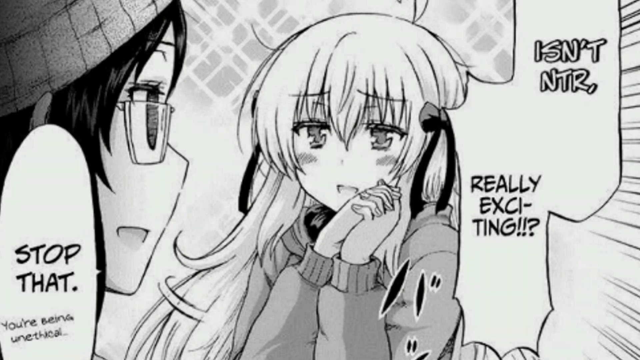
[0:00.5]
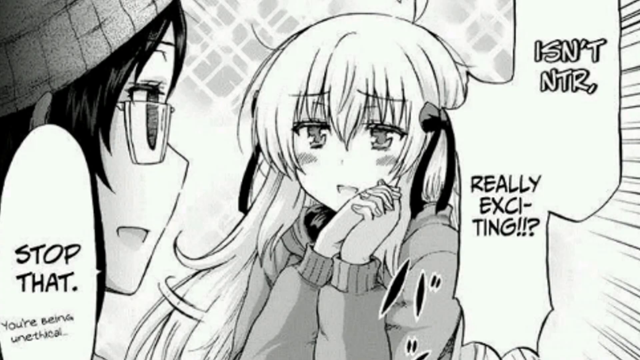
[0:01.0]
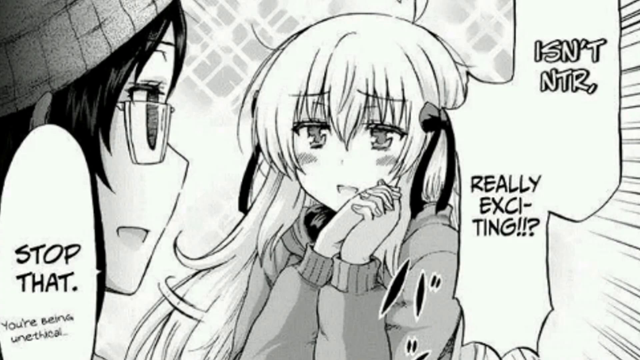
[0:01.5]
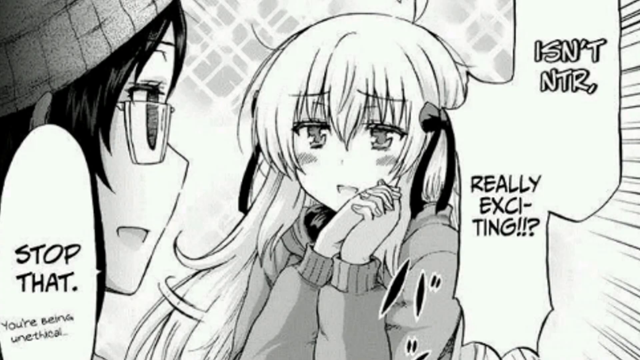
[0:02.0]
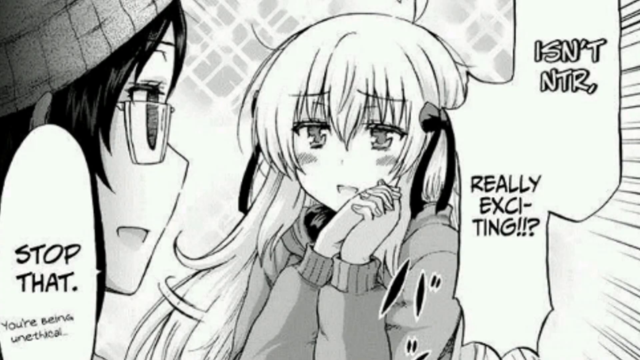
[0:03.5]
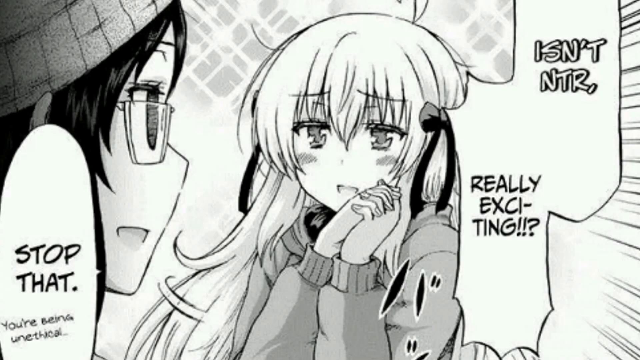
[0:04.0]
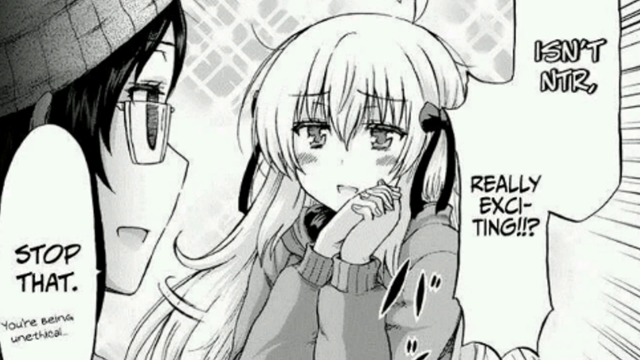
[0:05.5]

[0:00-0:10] The video opens on a scene that seems to be from a Japanese manga. A young girl with long blonde hair, wearing a sweater, looks very happy and is blushing a little. She puts her hands together and asks another girl, "isn't ntr really exciting?" The other girl, who wears a beanie and glasses and is probably in her 20s, replies, "stop that, you're being unethical." There are glimmers of light in the background. The blonde girl seems very excited, her face literally glowing.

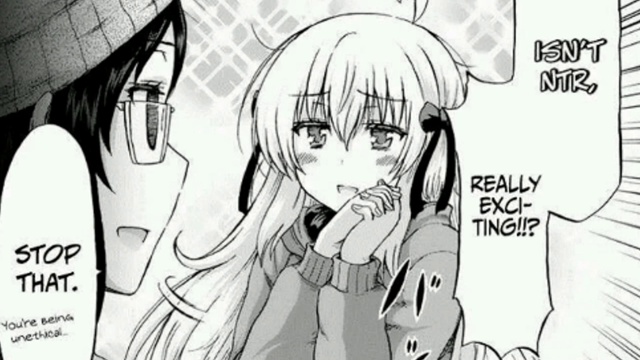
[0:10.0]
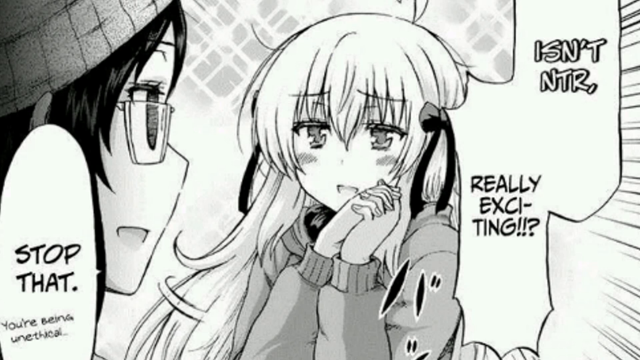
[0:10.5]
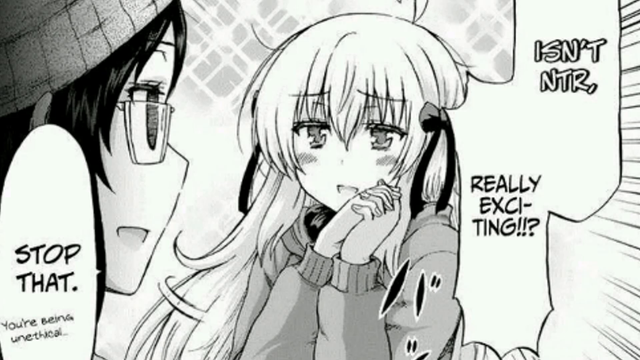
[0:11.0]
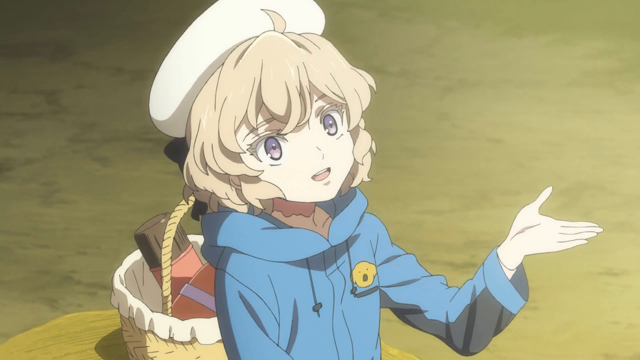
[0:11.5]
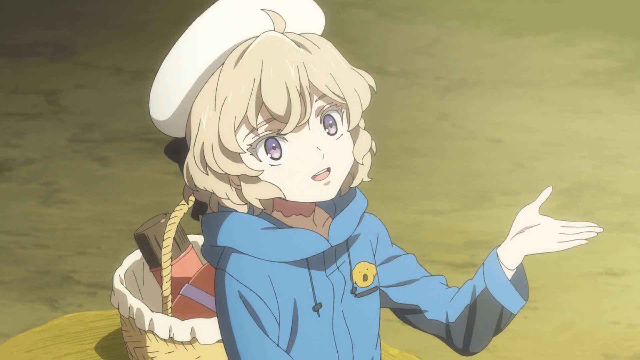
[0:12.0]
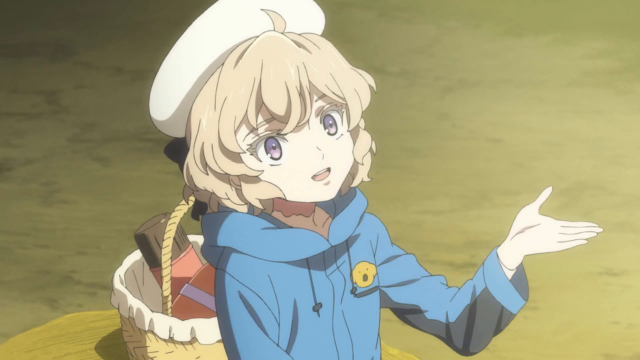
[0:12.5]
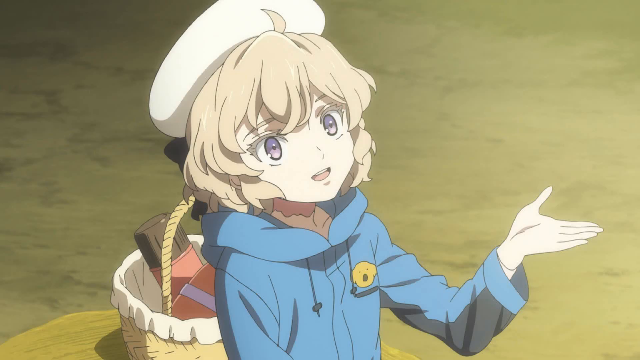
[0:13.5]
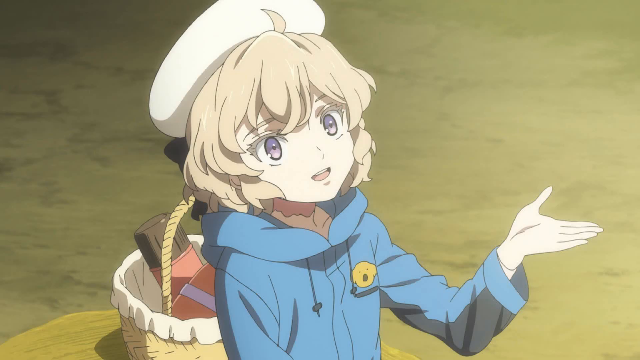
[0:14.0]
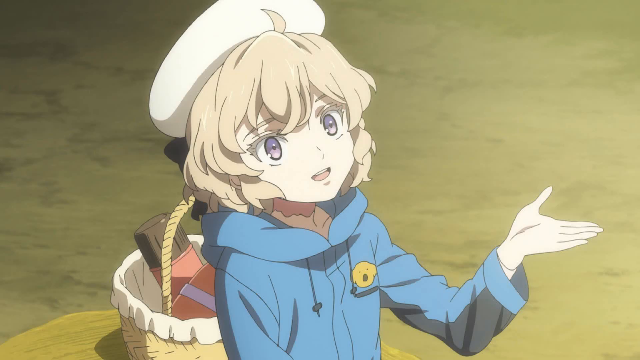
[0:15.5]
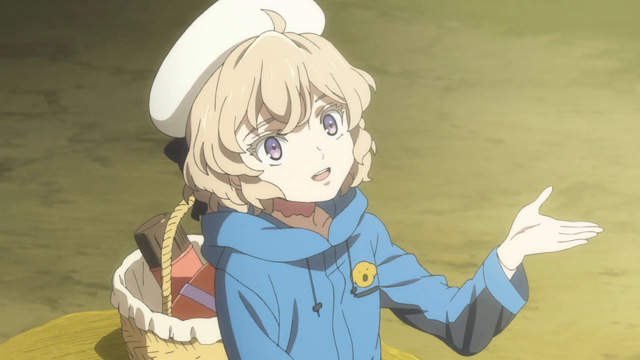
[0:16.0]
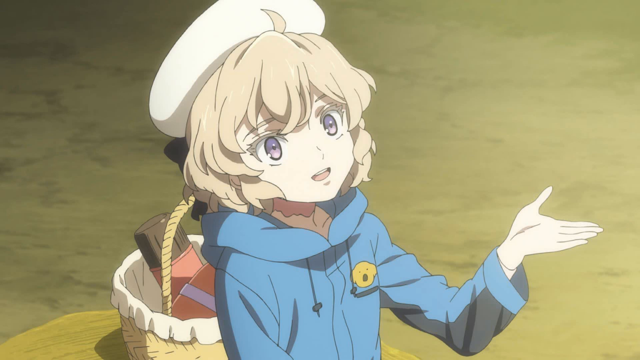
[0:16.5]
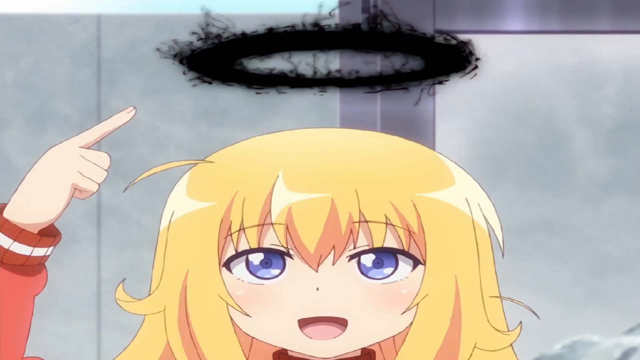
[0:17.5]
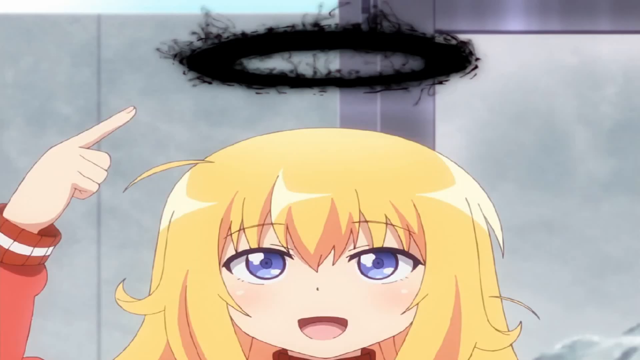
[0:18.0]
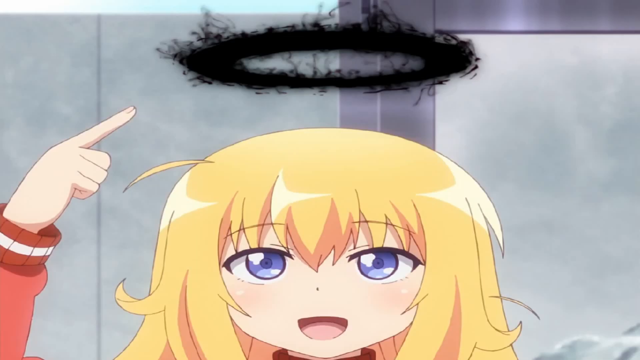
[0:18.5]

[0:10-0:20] A panel from a Japanese manga shows a blonde girl with long hair, probably in her late teens or maybe early 20s, wearing a sweater. She has big eyes and is blushing a little. She puts her hands together and asks a friend beside her, "isn't NTR really exciting?" The friend, also a young girl, wearing glasses and a beanie, replies, "stop that, it's really unethical." The scene then transitions to an animated scene of a different-looking girl, also blonde with big eyes, wearing something like a purple sweater and a white hat and carrying a water bottle. She looks up to the sky and puts her left hand out, as if speaking to somebody much bigger and taller, and she looks very focused. The last scene shows another young blonde girl, probably in her teens, with blue eyes; only her head is shown, and she points to a black halo on top of her head.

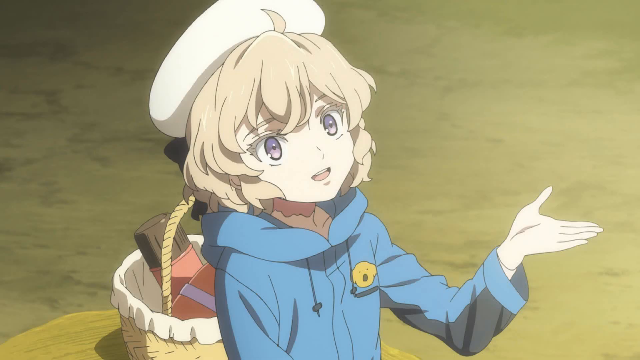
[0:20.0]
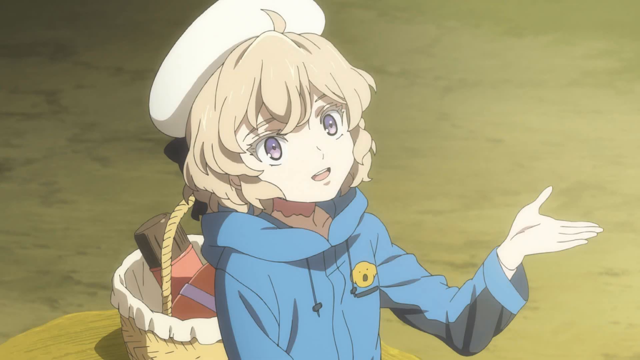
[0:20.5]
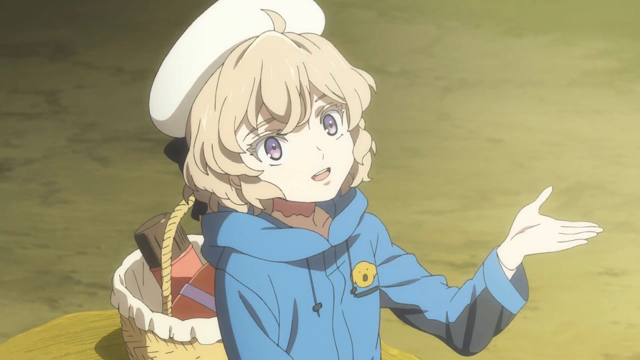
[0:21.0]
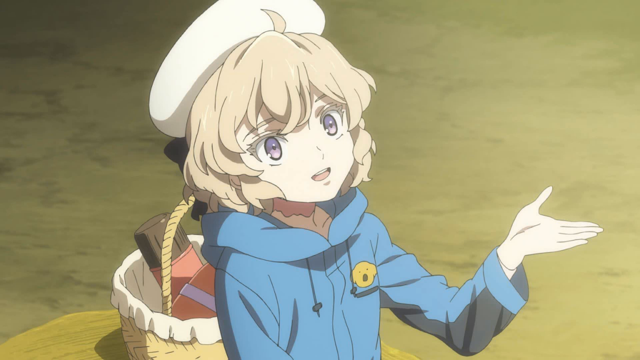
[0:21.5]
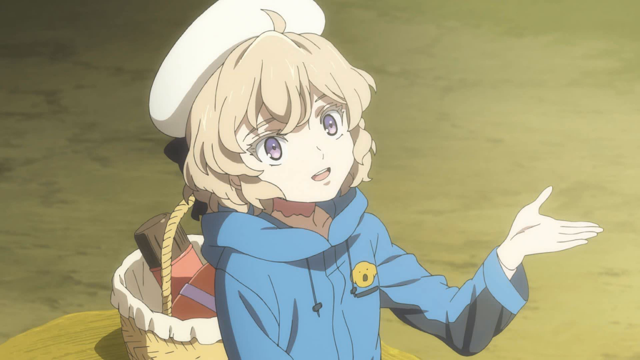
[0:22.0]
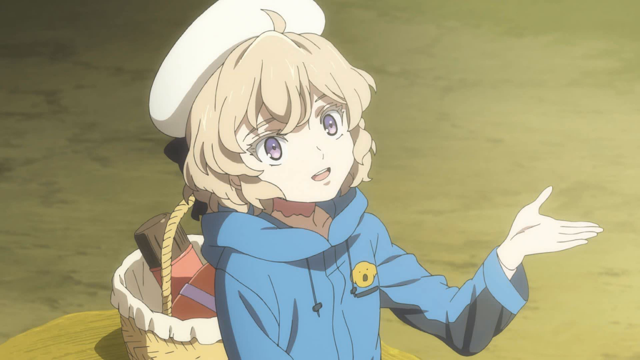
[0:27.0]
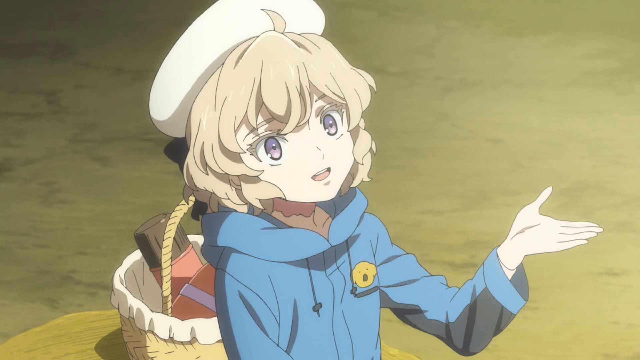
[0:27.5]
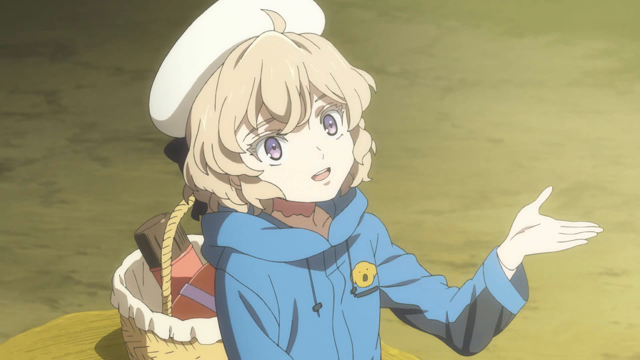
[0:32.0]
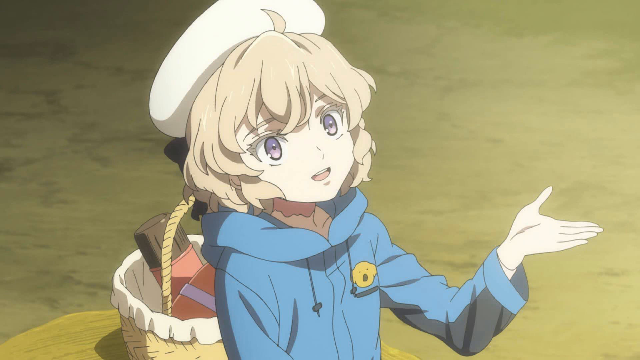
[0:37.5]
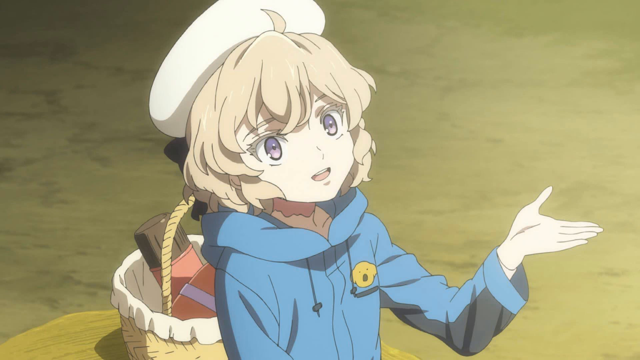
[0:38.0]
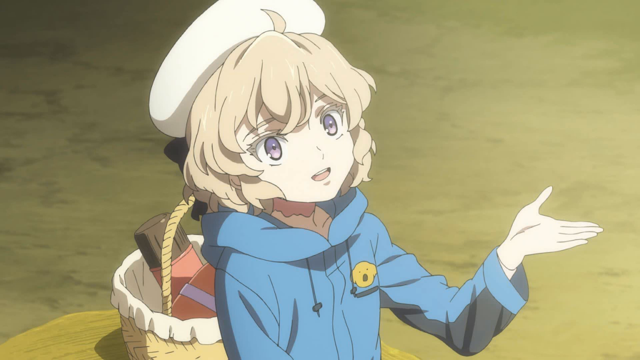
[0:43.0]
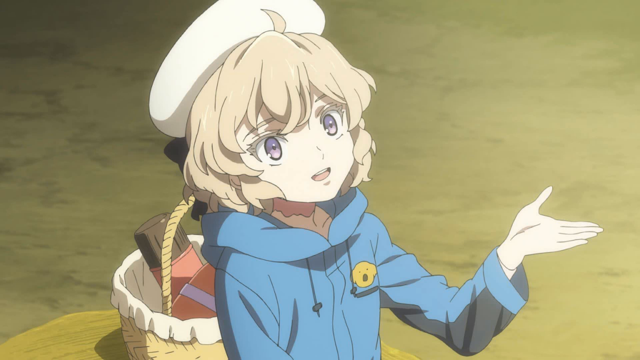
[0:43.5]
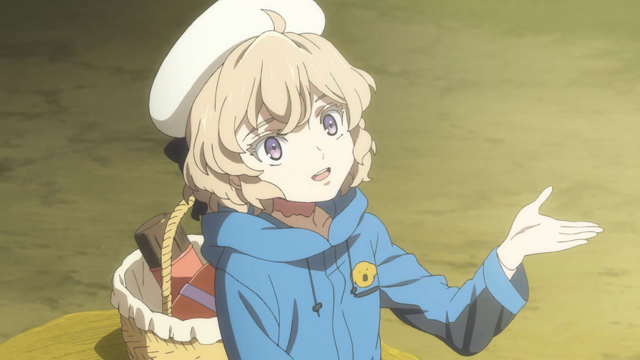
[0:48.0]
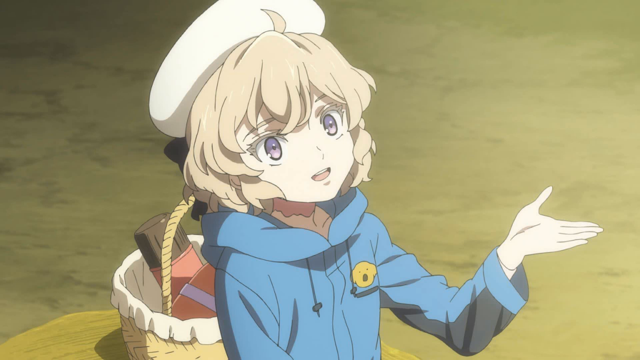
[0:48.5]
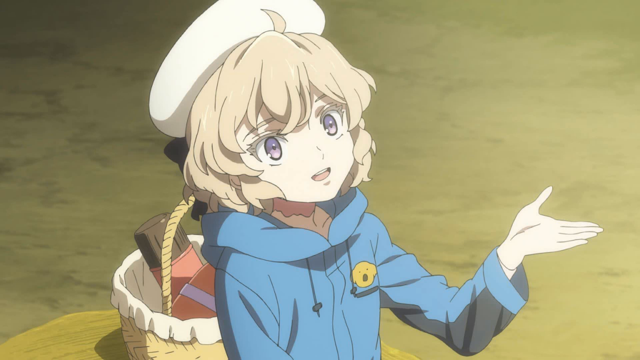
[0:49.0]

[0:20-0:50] An animated young blonde girl with short hair and big blue eyes wears a purple sweater with what seems to be a koala logo on it. She also wears a gray backpack with what seems to be maybe a water bottle inside. She holds out her hand as she looks up at some sort of figure in front of her, talking, and she looks like she is offering something. There is a wooden table behind her. She looks like she is admiring and showing respect to the one she is talking to. No other people or signs of life appear around her. Only half of her body is visible: her upper body, her left hand and her head.